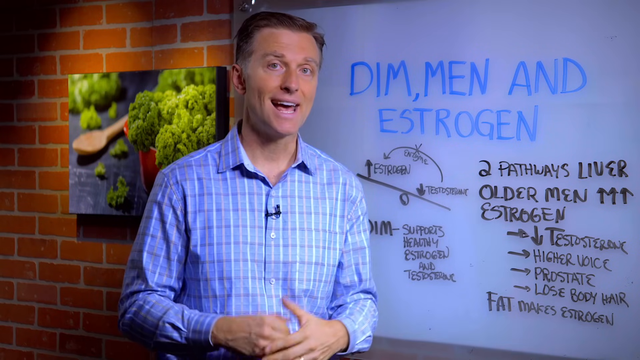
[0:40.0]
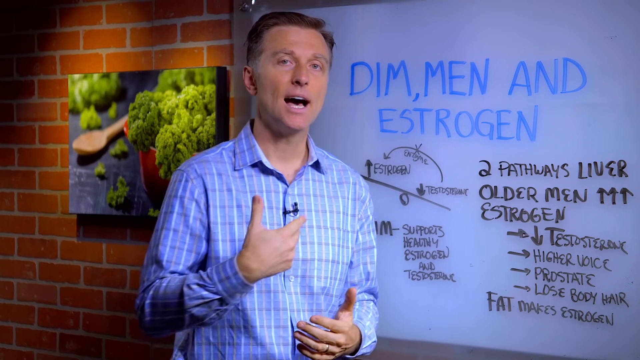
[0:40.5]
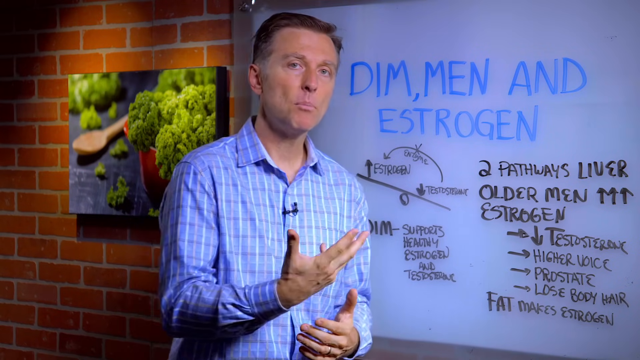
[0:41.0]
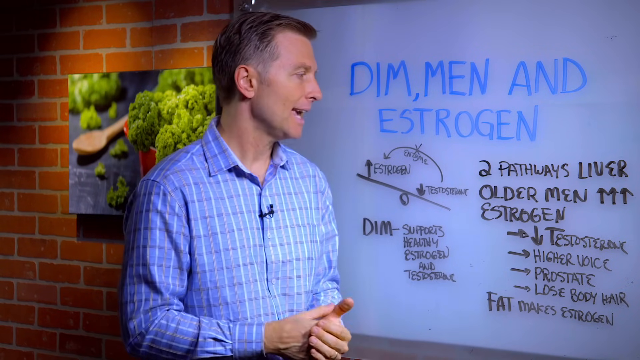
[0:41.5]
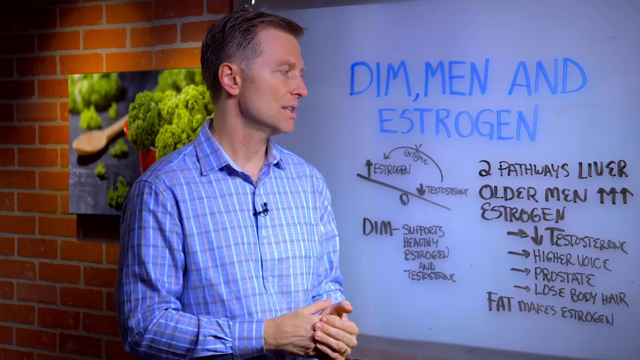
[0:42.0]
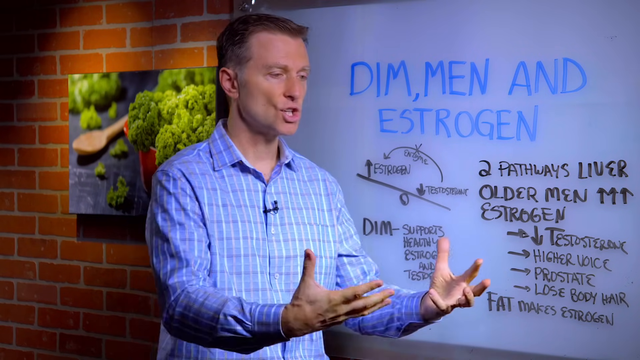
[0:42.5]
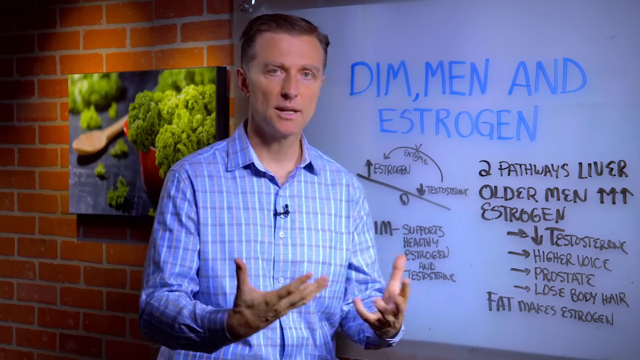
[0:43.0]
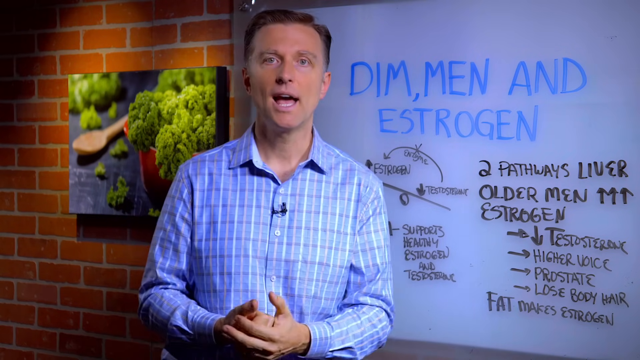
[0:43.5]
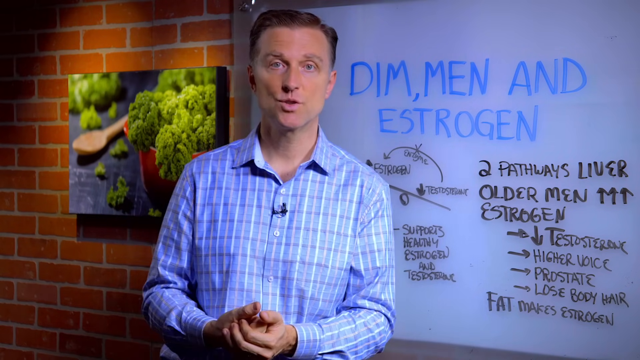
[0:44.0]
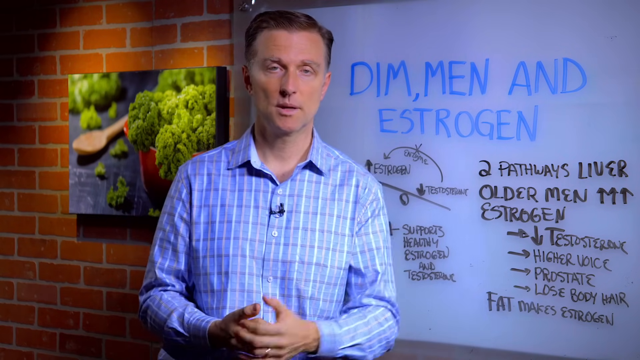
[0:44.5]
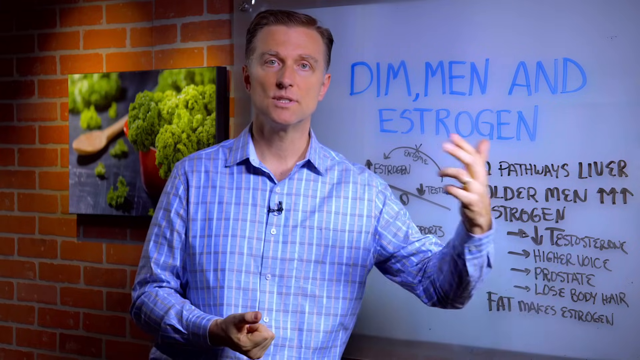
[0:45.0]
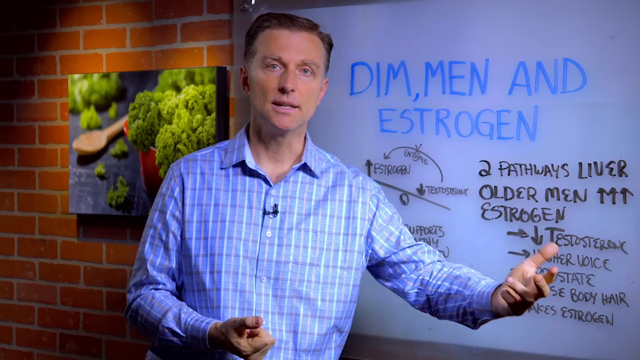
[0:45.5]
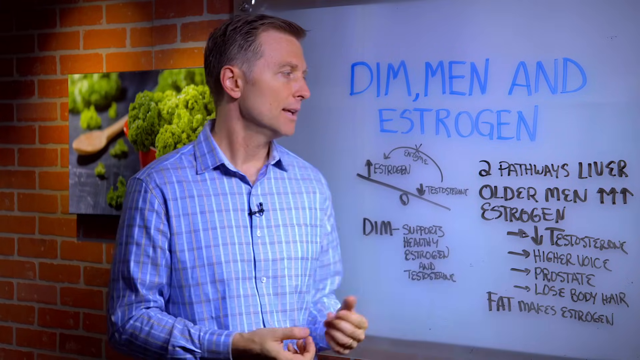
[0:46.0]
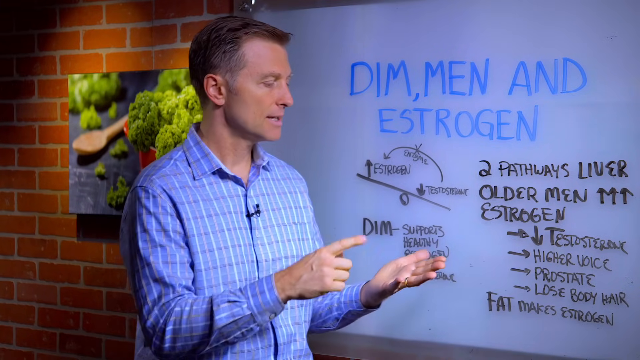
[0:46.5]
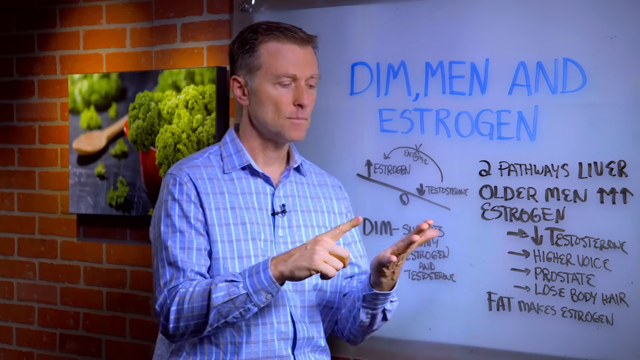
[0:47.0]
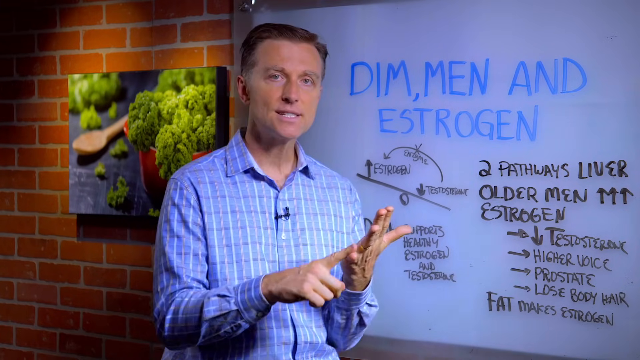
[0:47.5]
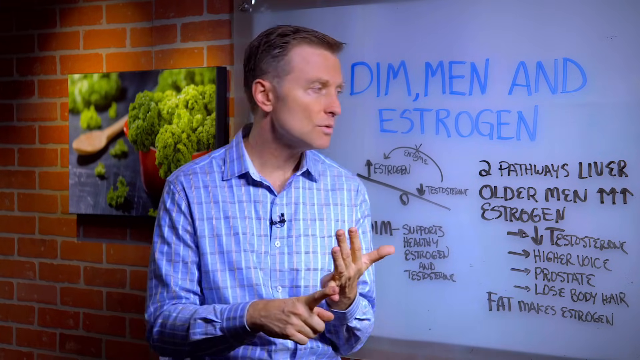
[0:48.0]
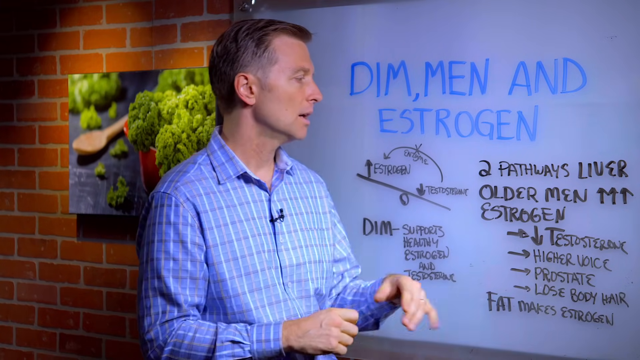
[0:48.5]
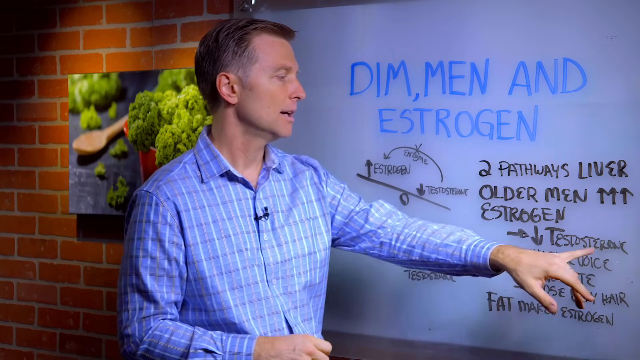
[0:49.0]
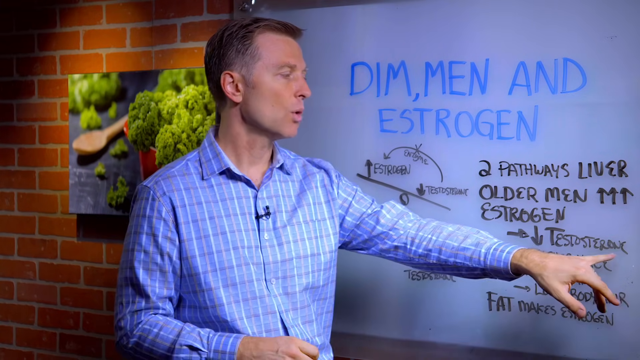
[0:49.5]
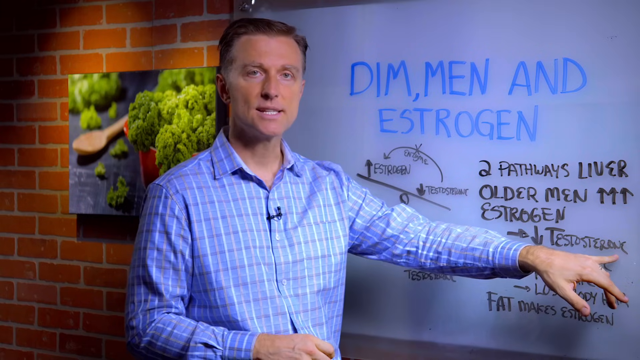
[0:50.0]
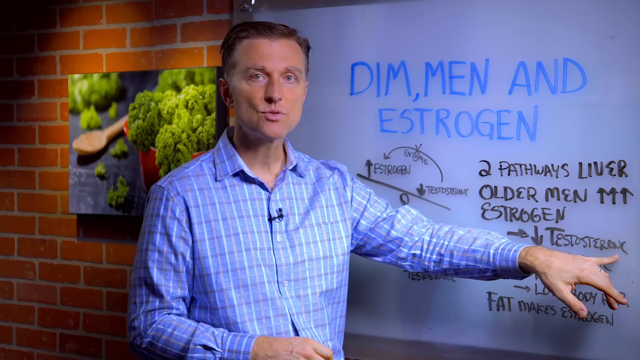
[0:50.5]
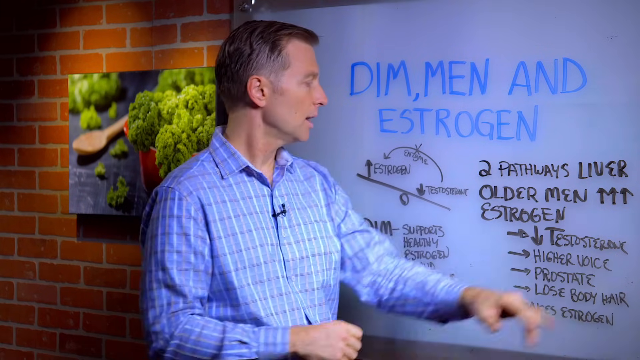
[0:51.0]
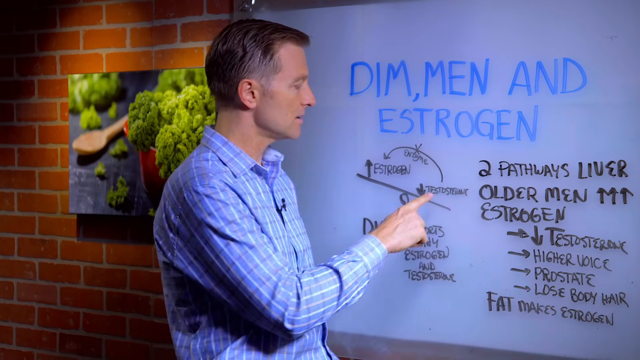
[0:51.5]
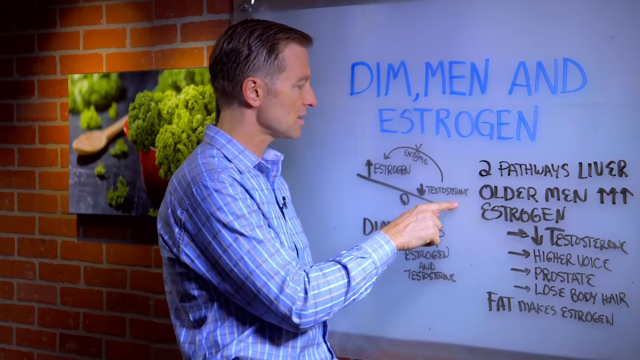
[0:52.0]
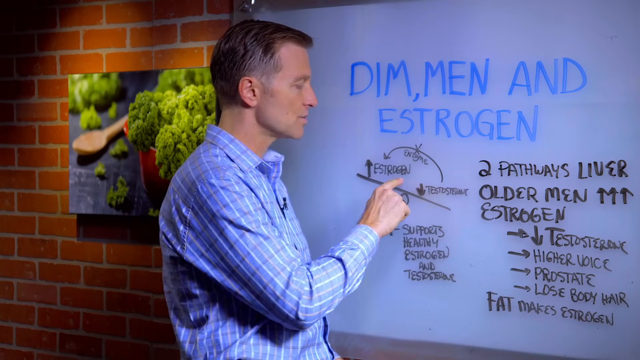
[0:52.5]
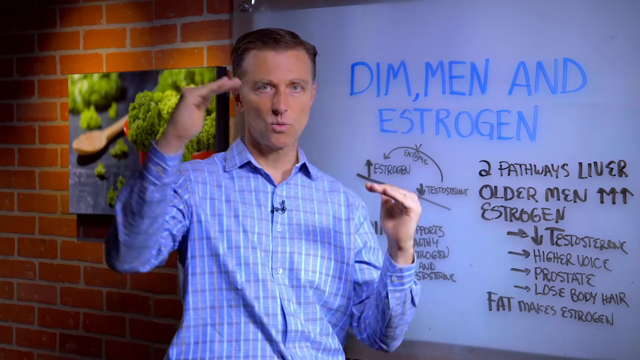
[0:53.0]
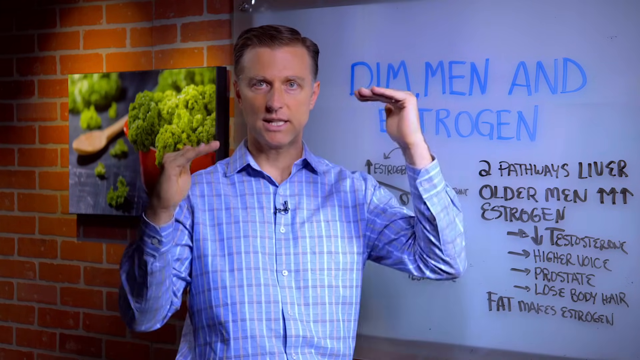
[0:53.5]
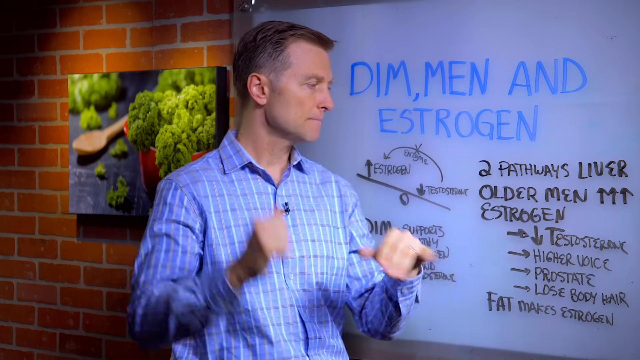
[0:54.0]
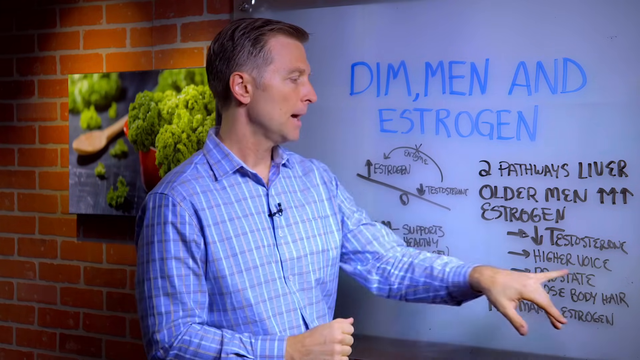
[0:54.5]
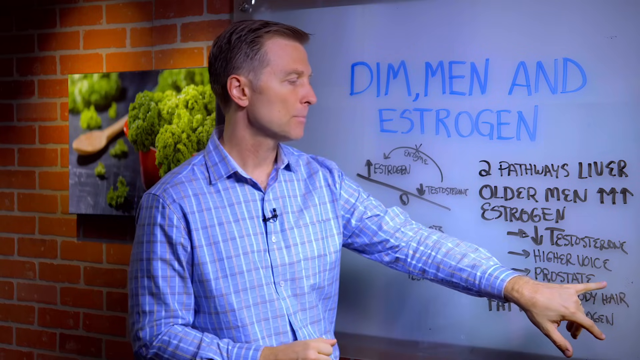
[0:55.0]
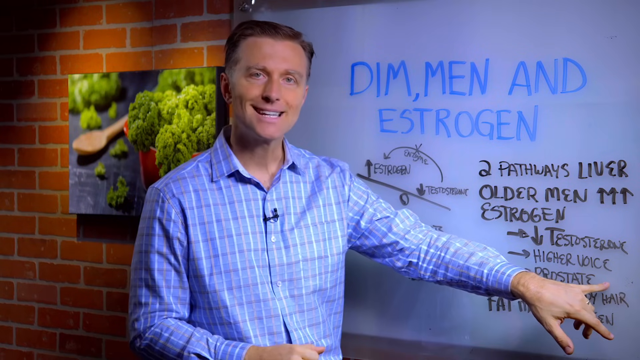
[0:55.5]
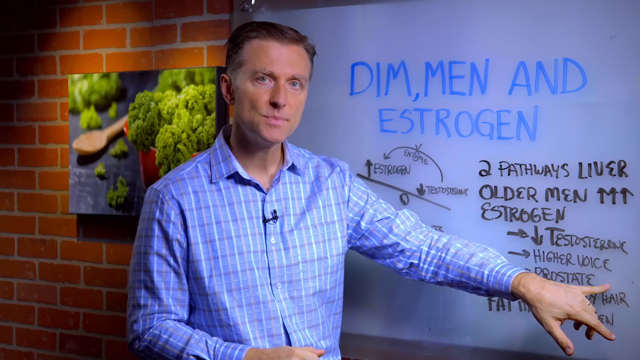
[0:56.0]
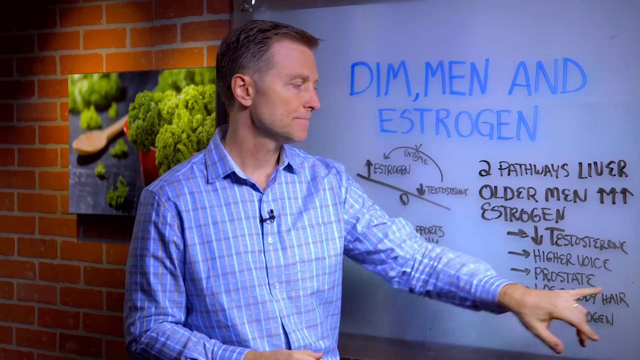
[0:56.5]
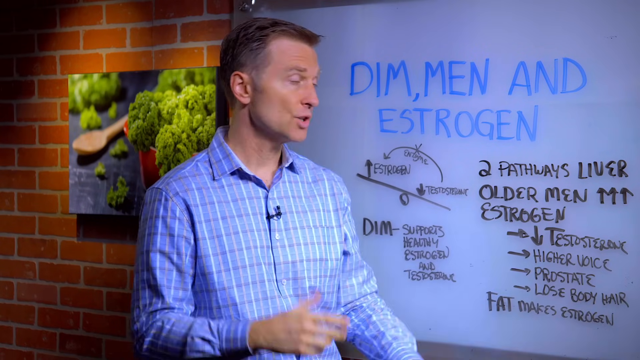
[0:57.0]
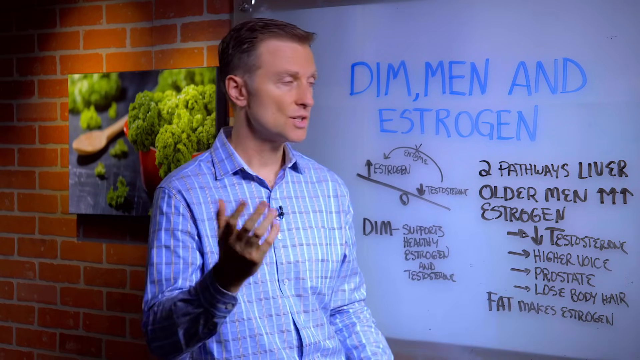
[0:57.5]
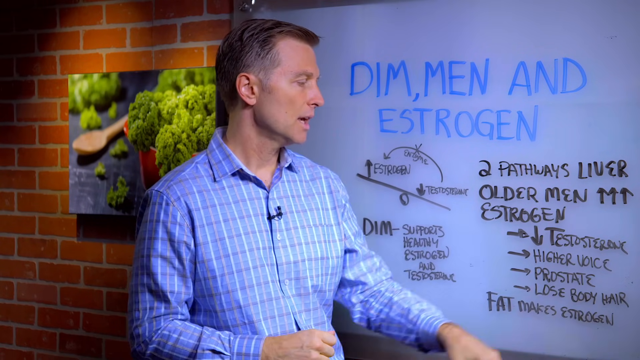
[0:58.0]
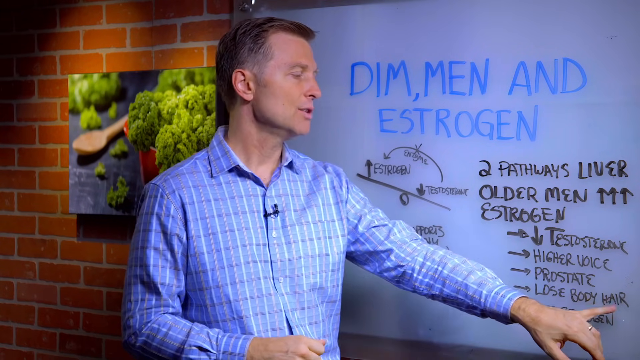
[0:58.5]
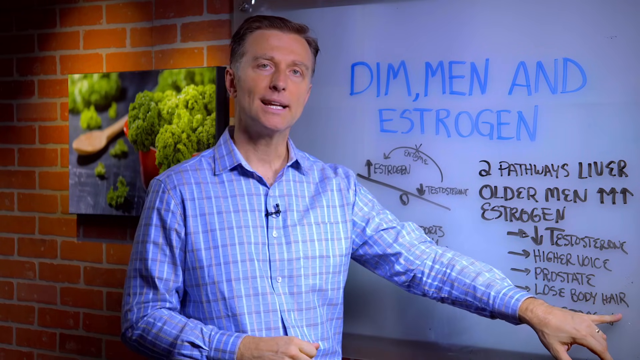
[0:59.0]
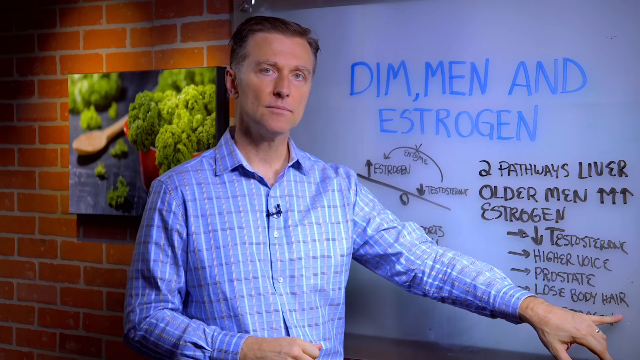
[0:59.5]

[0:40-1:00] A man in a blue plaited shirt has a small black microphone clipped to his shirt where the buttons run downward. Behind him is a whiteboard with "Dim, men, and estrogen" in blue at the top and additional information listed directly below in black. He moves his hands as he talks, looks at the camera, and at times looks at the board and points to different words on it. He shows where there is a scale that says "estrogen" on one side and "testosterone" on the other, moving his hands up and down. He continues to go over different areas of the board, pointing to them and talking to the camera.